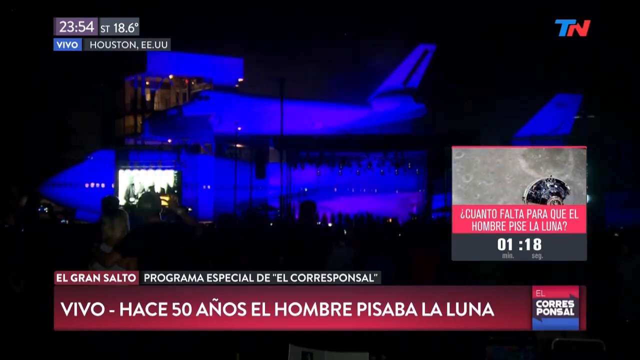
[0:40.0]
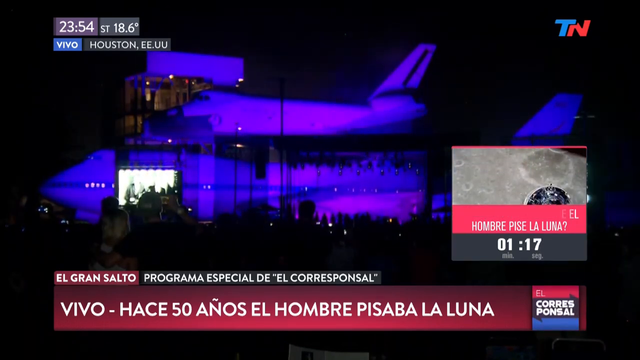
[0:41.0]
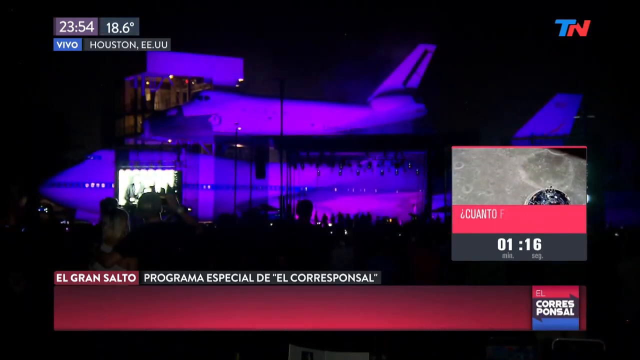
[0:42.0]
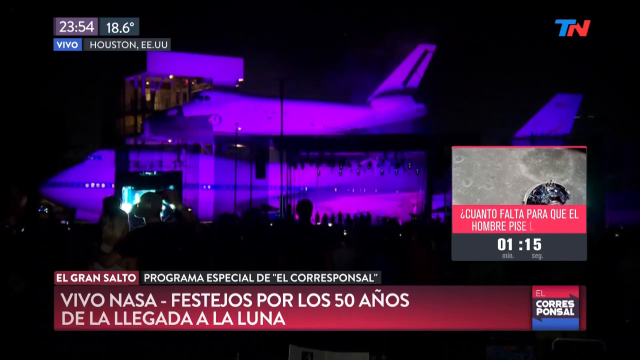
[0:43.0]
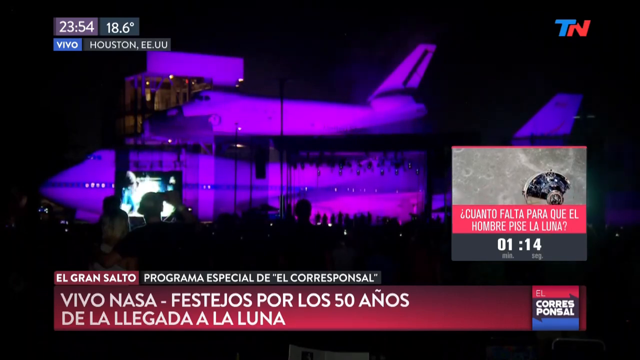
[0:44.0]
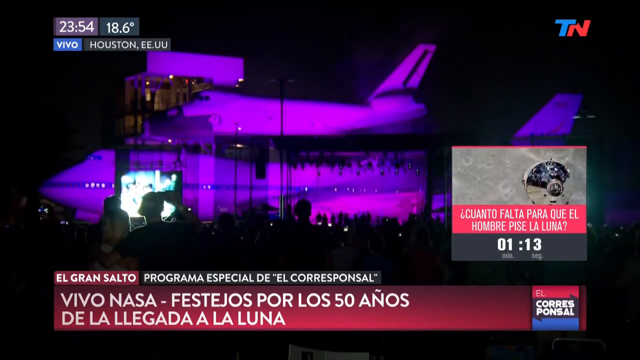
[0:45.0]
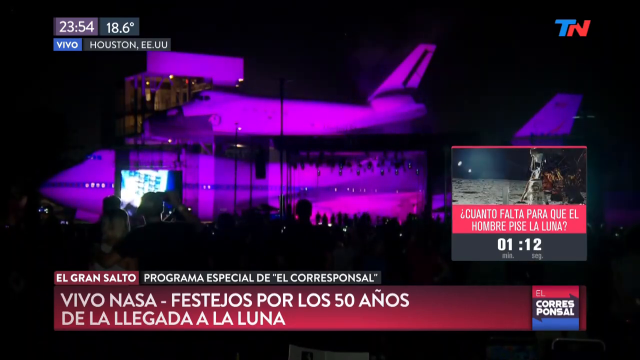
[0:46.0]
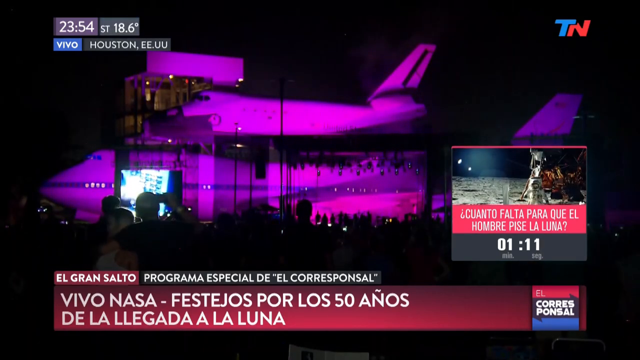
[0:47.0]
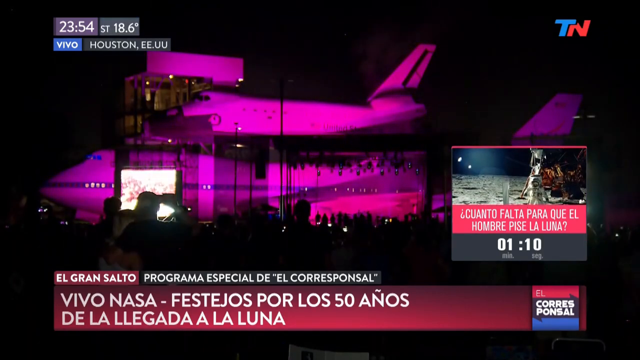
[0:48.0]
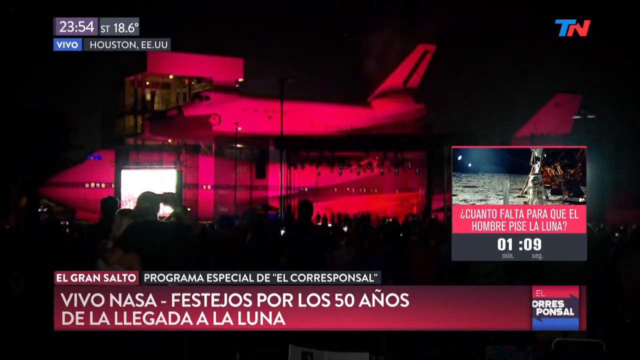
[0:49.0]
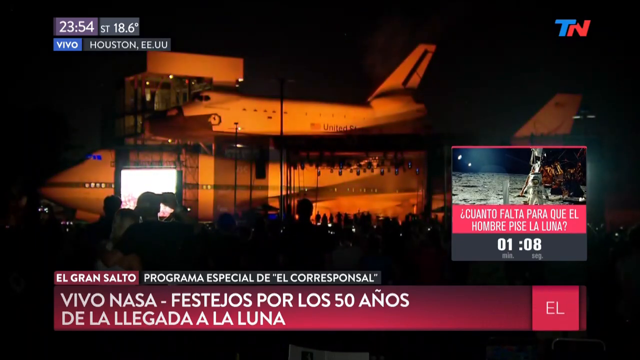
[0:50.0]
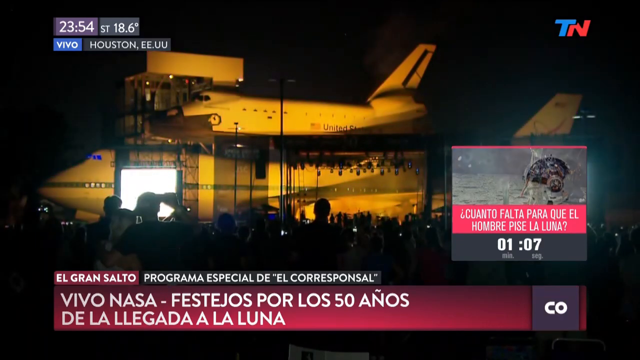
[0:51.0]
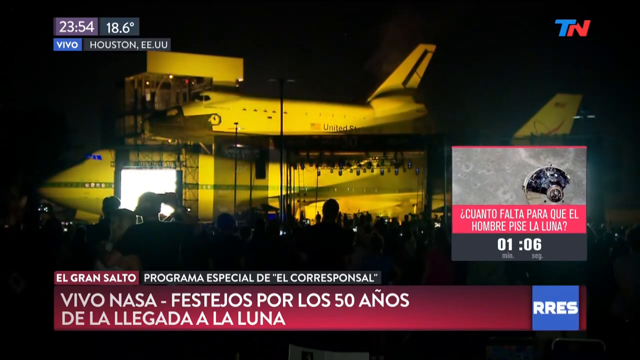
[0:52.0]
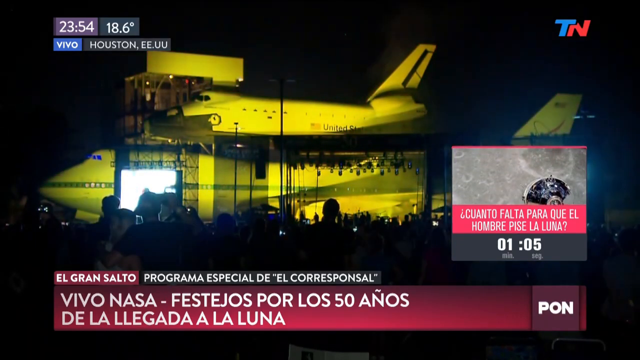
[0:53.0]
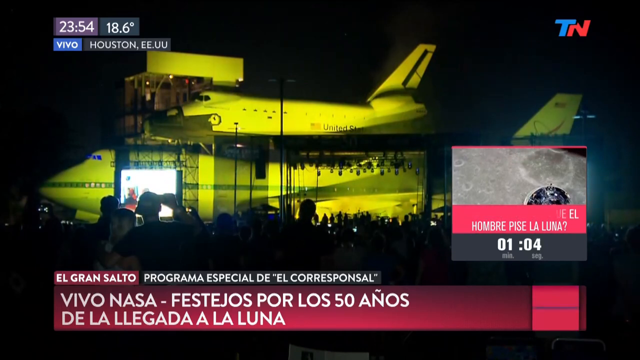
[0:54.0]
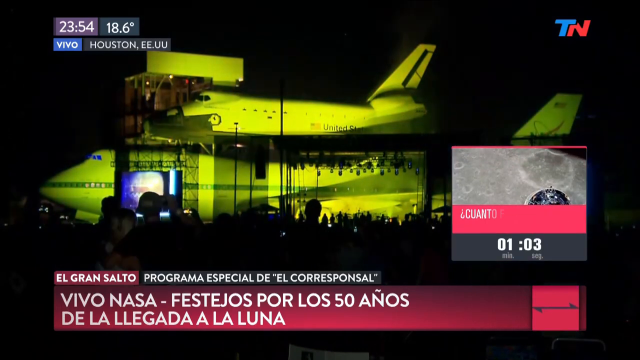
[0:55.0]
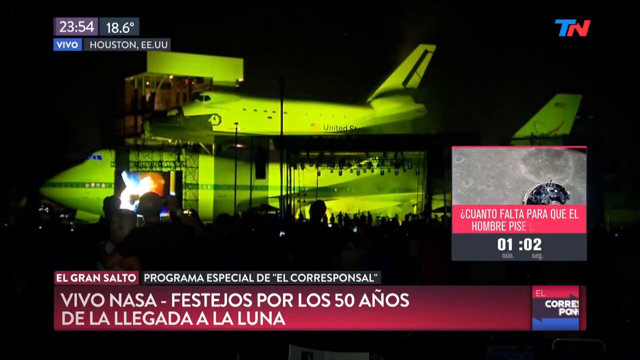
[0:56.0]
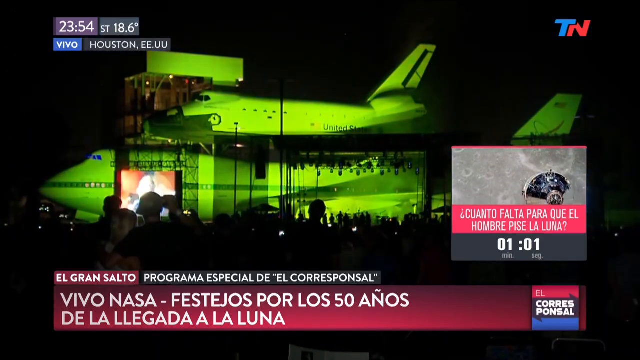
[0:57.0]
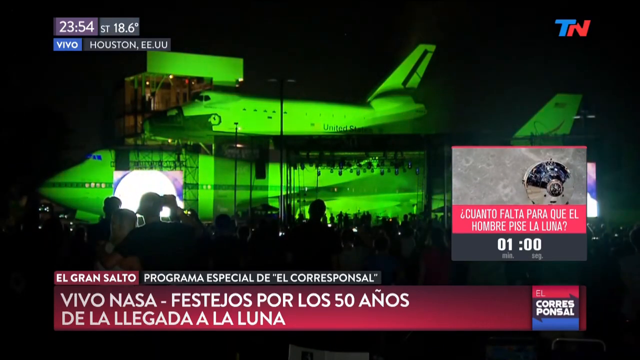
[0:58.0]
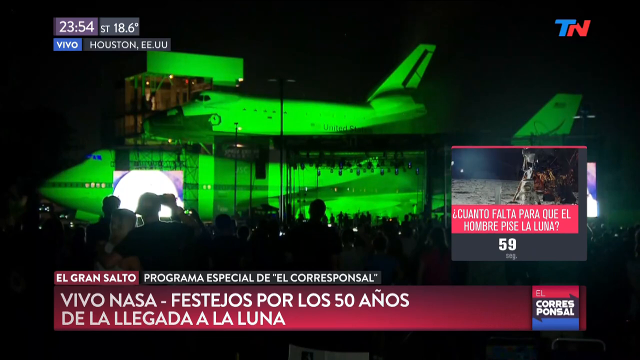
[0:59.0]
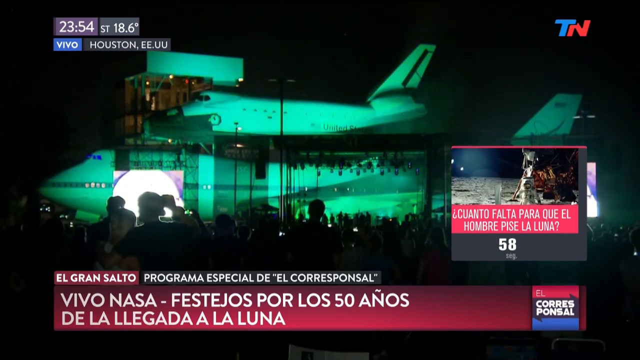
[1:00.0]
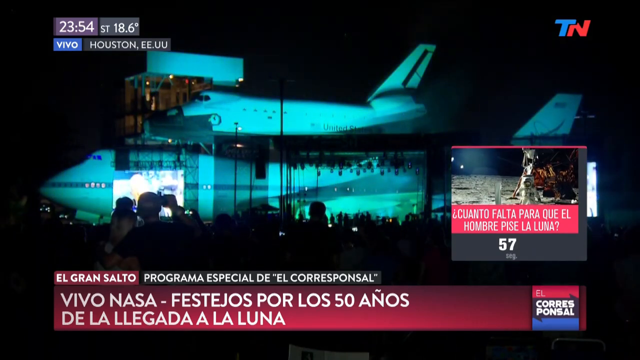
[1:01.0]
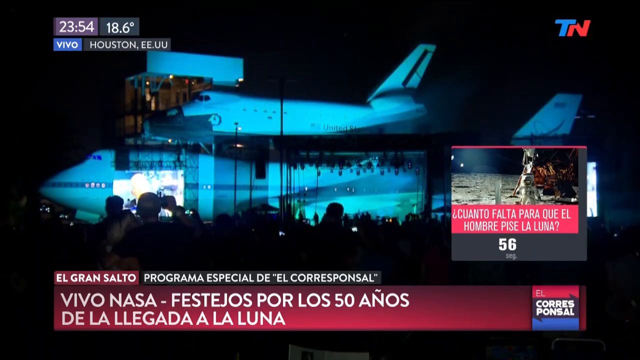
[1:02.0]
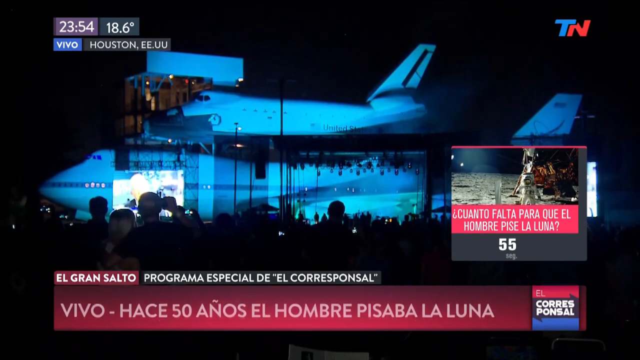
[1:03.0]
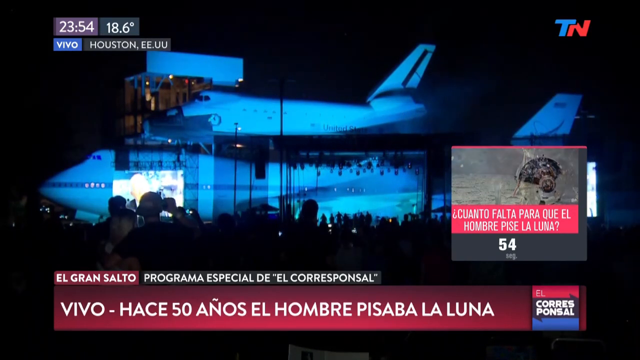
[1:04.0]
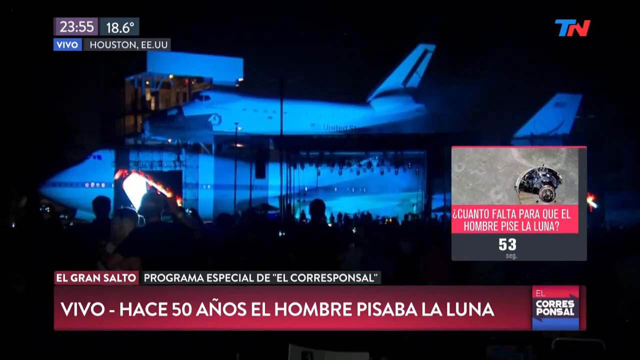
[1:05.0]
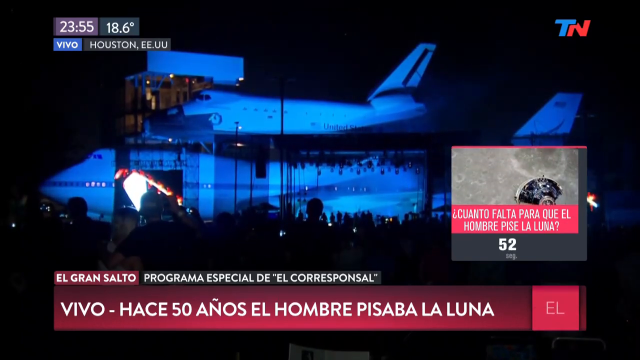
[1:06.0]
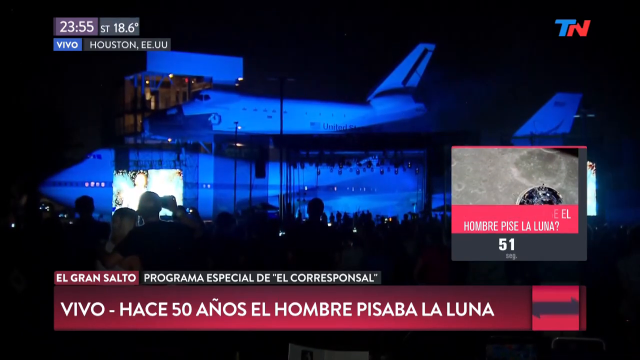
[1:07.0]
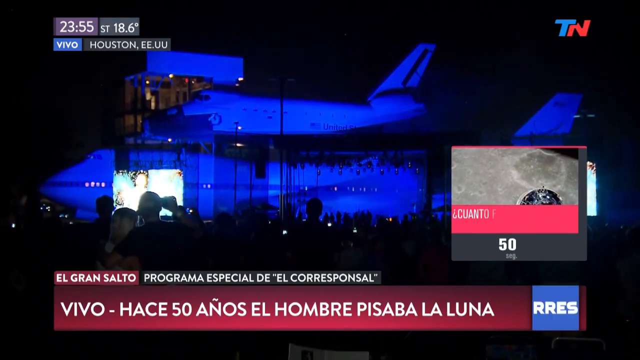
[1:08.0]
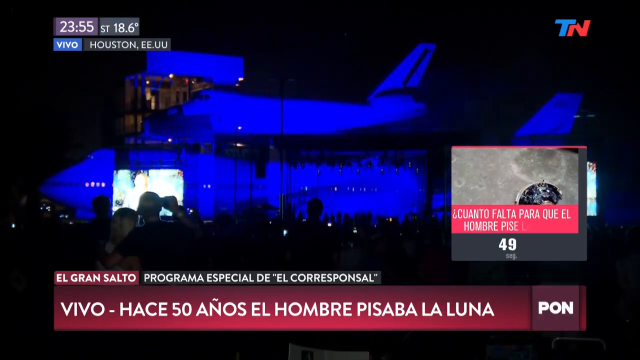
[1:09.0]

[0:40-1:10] More of the airplane is shown, with lights of different colors on it. On-screen text mentions NASA and something about the moon, including the word "Luna." The craft looks like a plane, though it may be a spaceship. People have their phones out, videotaping. The time is 11:54 at night, and the countdown is down to almost a minute.